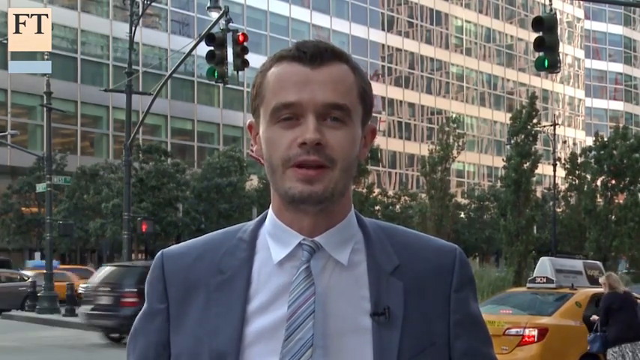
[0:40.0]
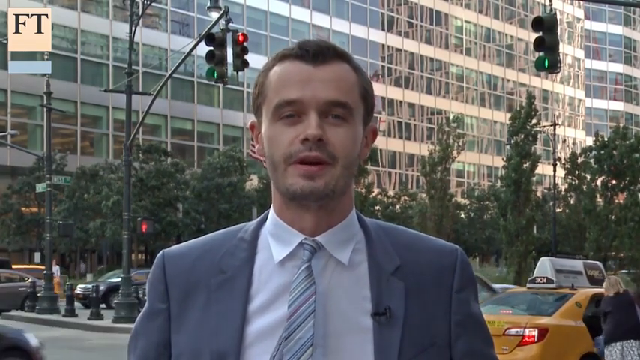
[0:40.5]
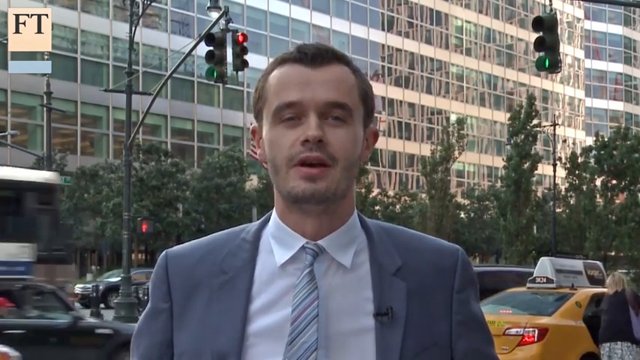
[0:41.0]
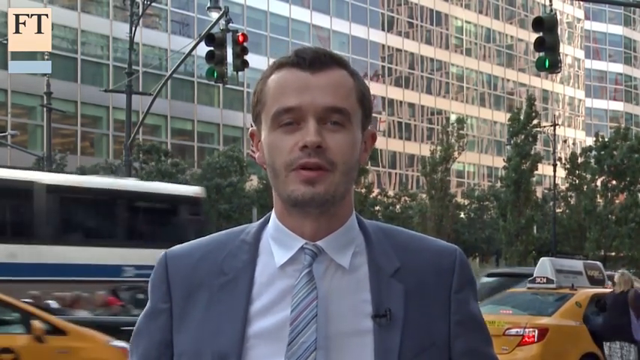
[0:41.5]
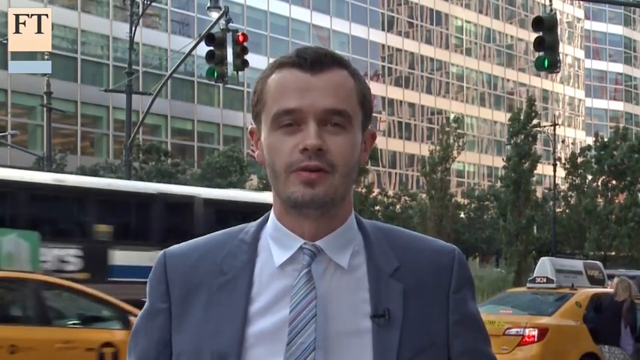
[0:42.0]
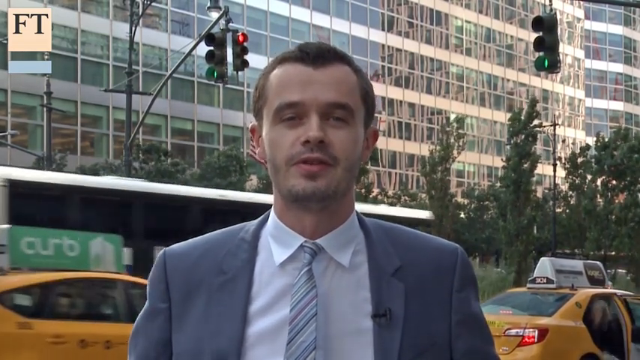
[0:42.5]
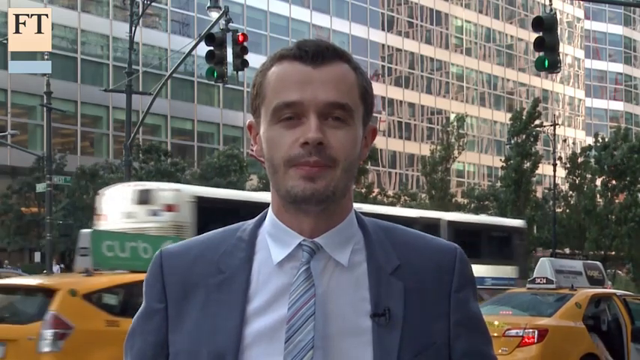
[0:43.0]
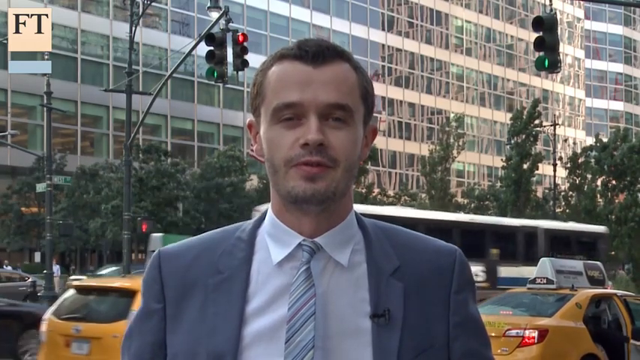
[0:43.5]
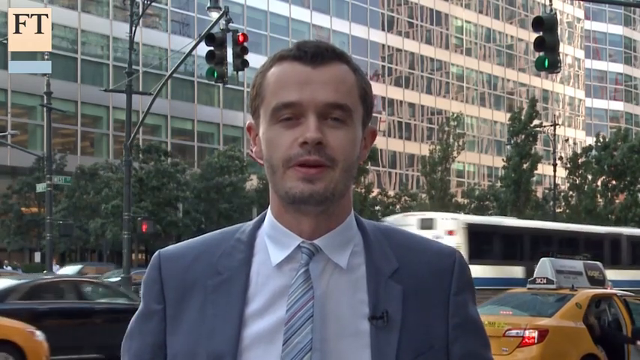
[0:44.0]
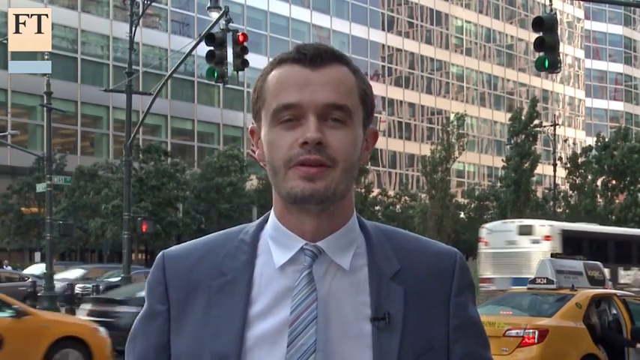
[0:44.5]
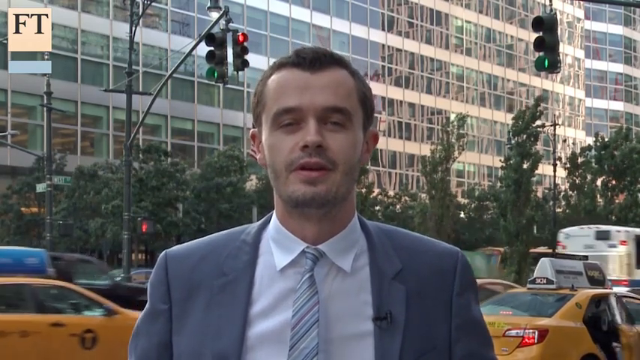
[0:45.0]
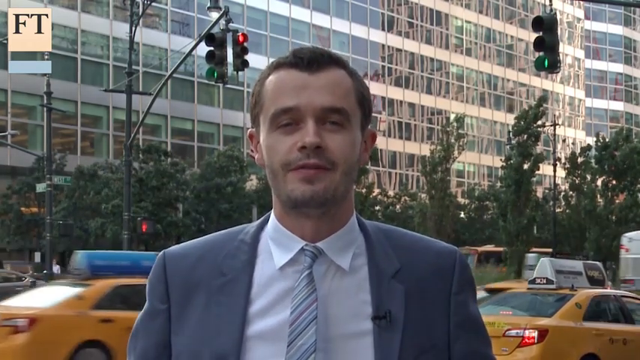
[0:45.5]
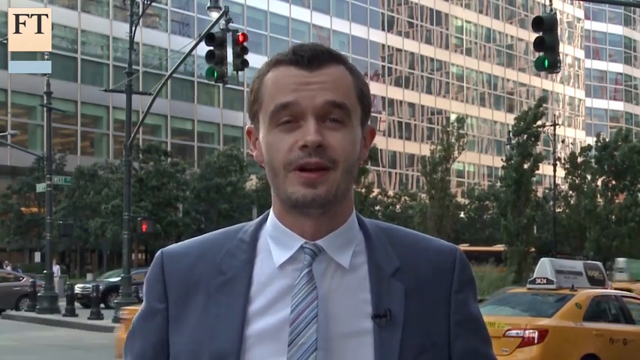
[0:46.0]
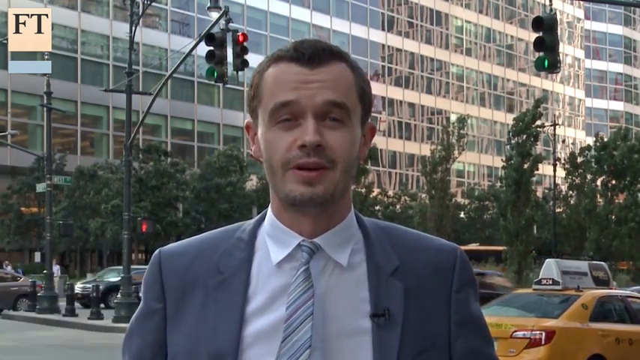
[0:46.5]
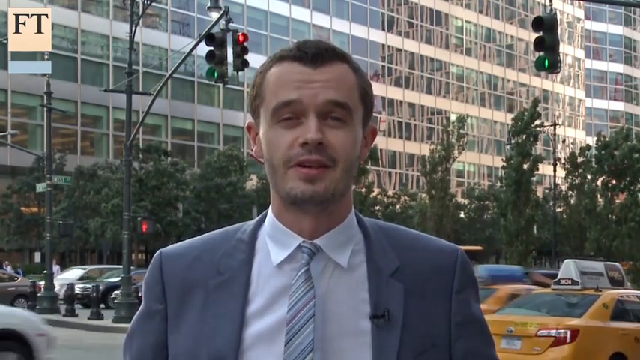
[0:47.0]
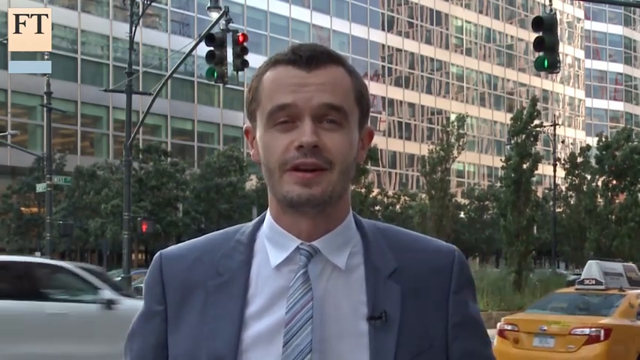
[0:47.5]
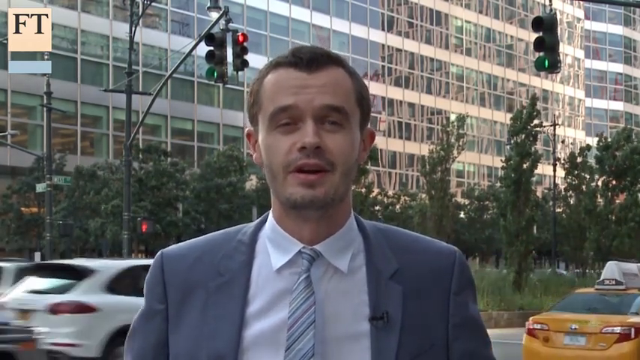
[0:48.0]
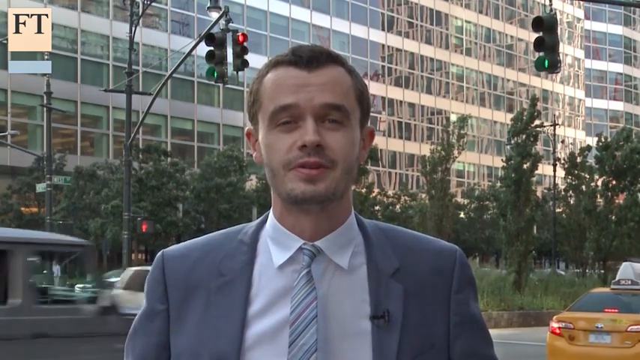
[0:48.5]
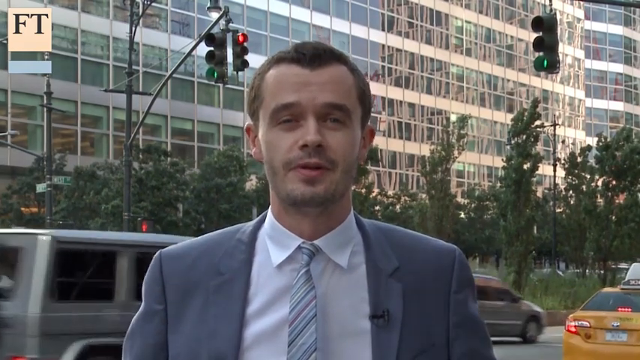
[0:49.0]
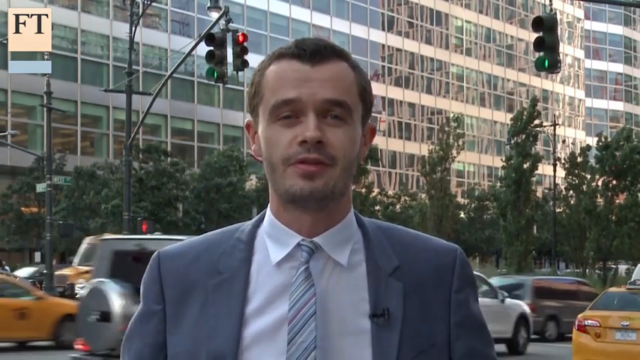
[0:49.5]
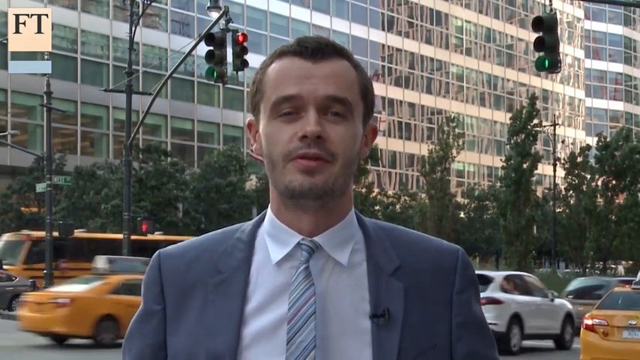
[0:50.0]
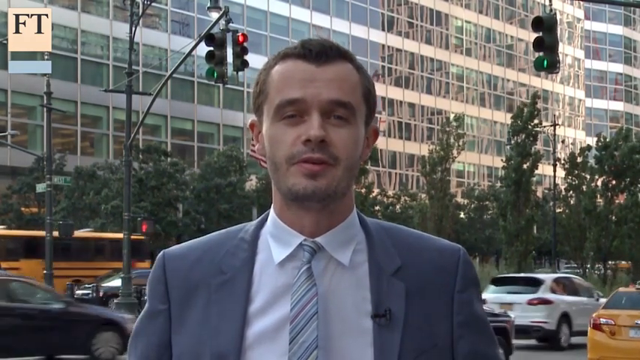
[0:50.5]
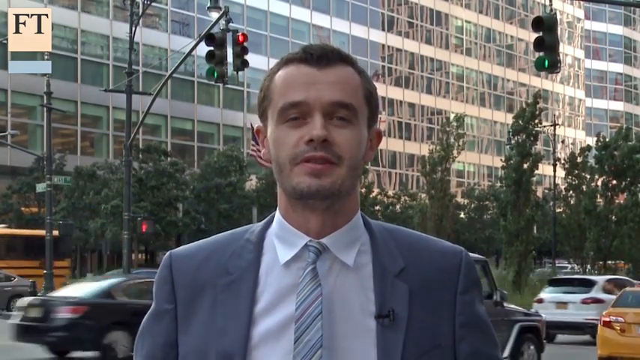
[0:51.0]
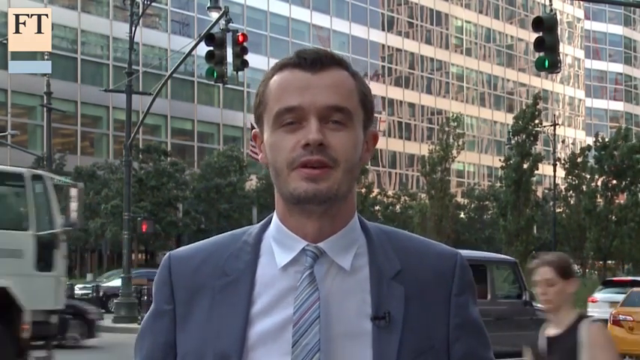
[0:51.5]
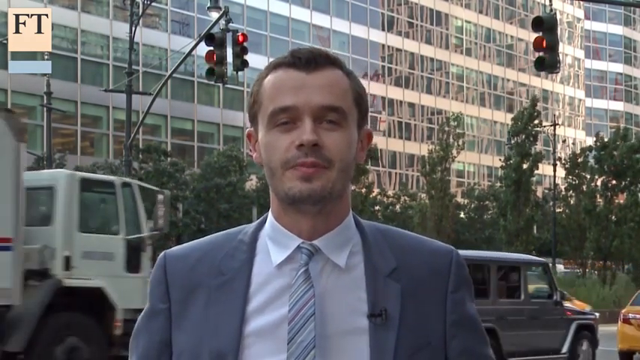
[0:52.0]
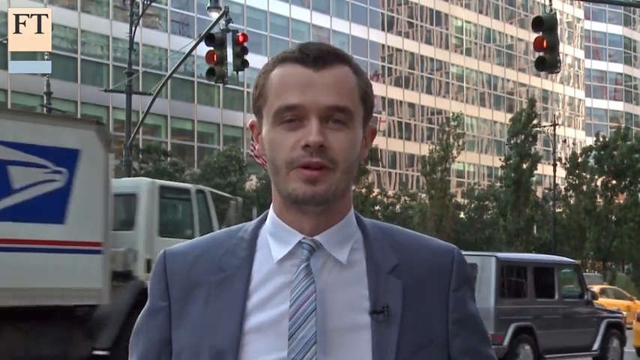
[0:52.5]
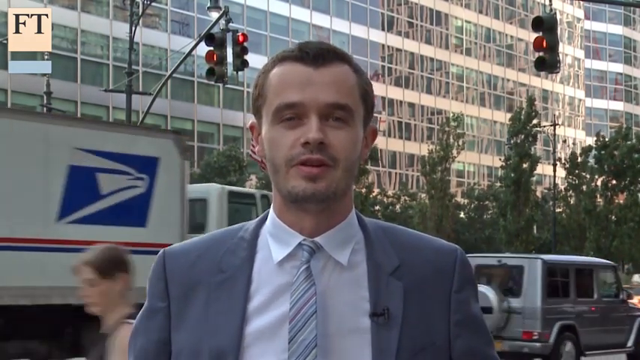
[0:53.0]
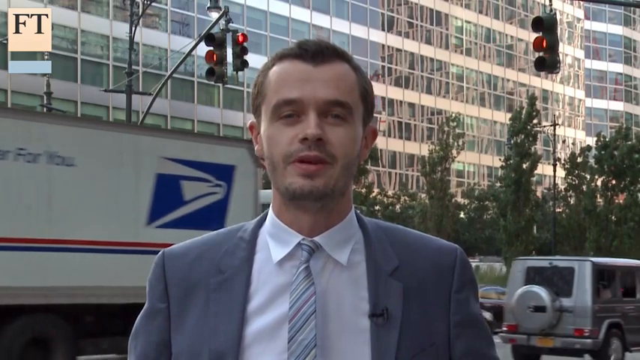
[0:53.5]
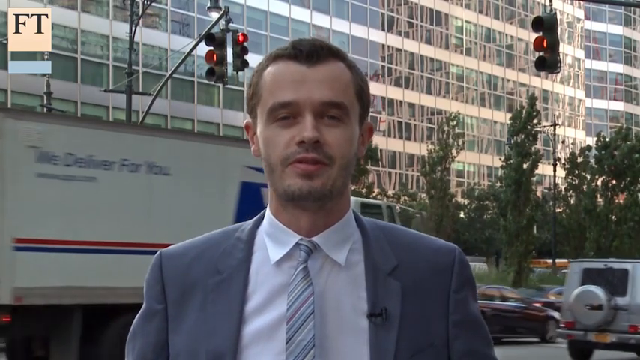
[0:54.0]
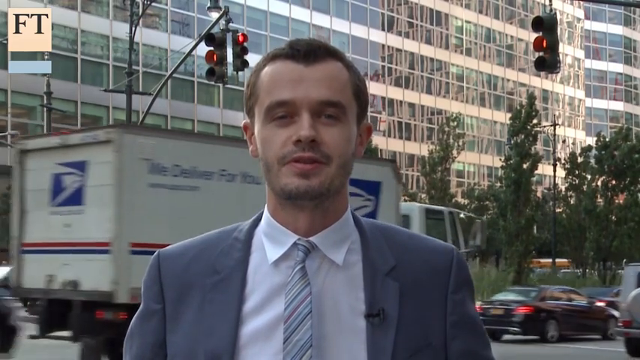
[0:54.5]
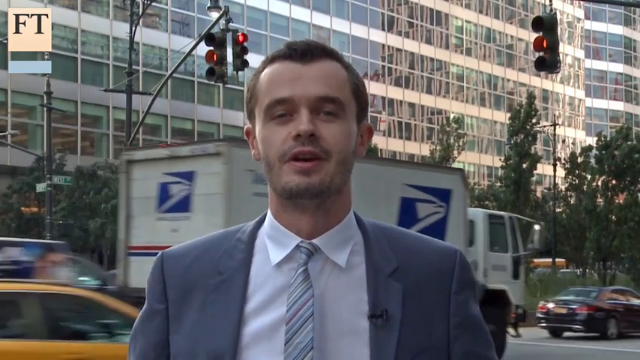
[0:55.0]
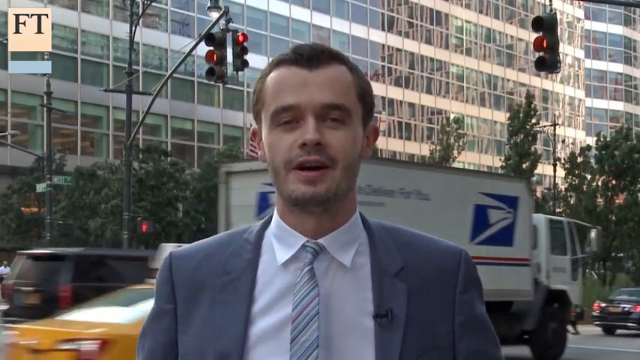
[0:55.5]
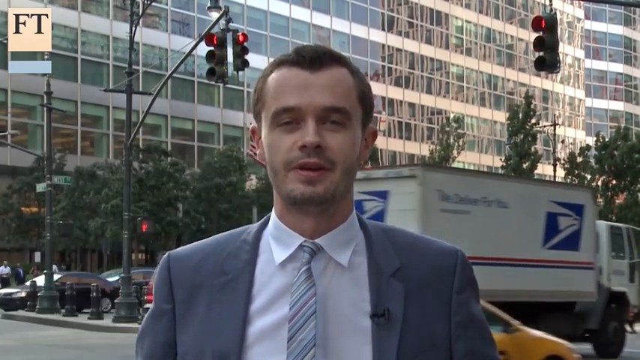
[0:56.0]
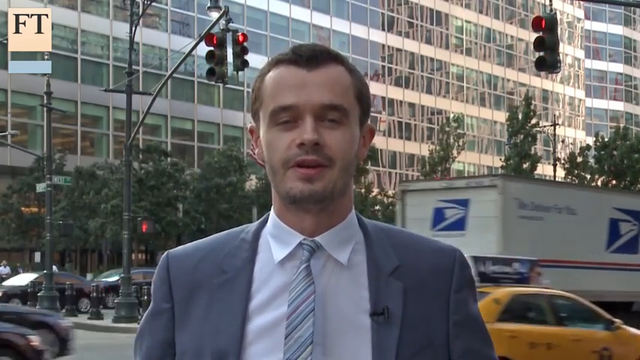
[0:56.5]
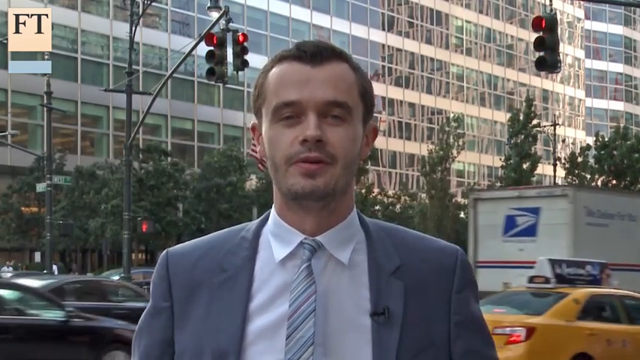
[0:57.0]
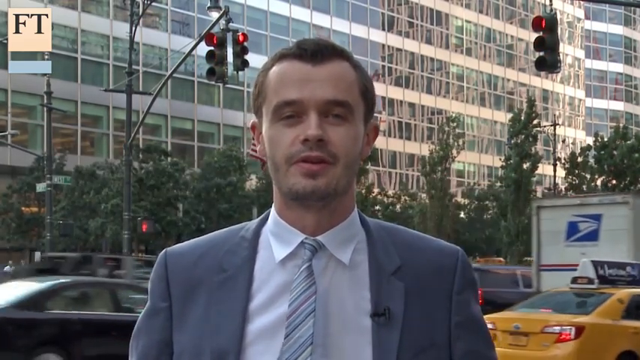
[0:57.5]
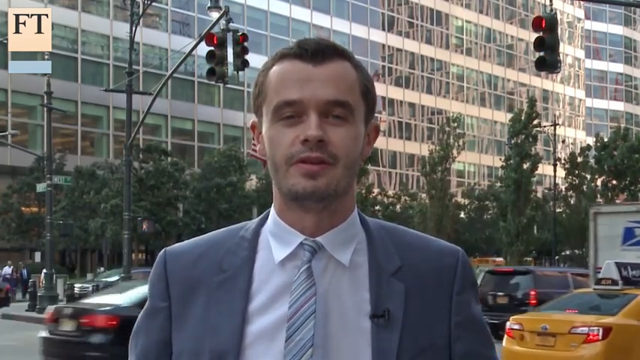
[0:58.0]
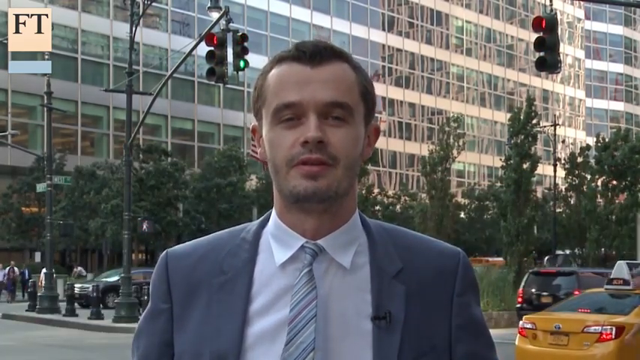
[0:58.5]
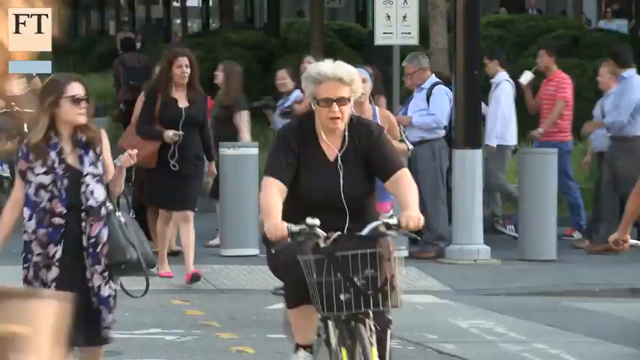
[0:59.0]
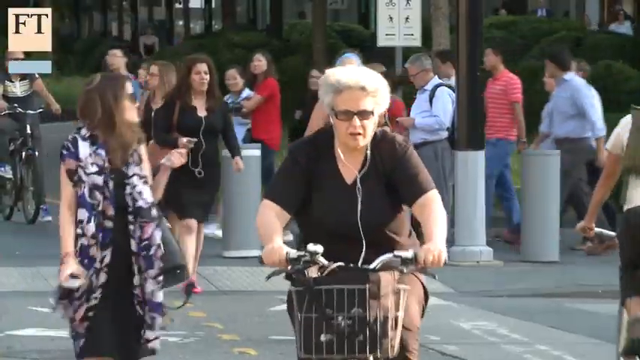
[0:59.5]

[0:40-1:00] Alistair, a correspondent for the Financial Times, speaks on a very busy street corner. A US mail truck, a bus and a G wagon go by, and people walk and cross the street behind him. A yellow taxi stops for a passenger on the corner. People cross the street walking toward the camera; a woman with gray hair rides a bike very close to the camera, with a jogger behind her and other people crossing at the same time. The traffic light behind him turns from green to yellow to red. In the median between the two streets is a section with trees and what looks like some kind of long grass.